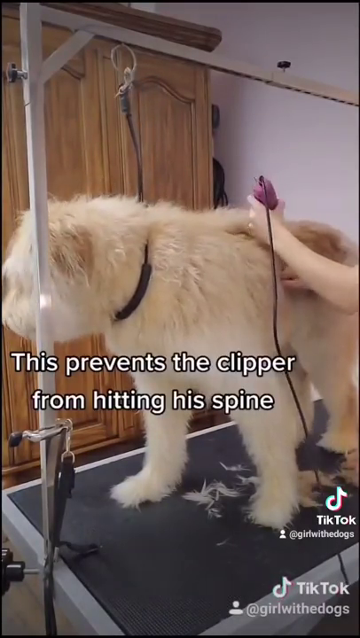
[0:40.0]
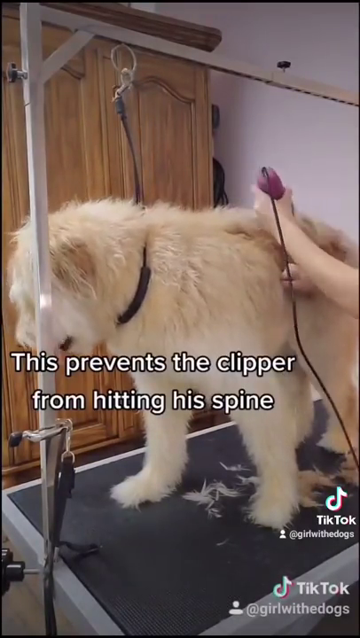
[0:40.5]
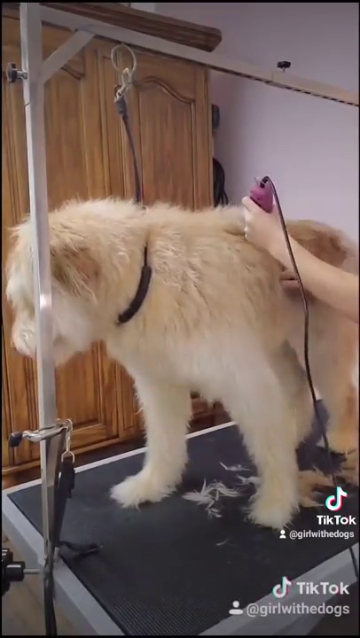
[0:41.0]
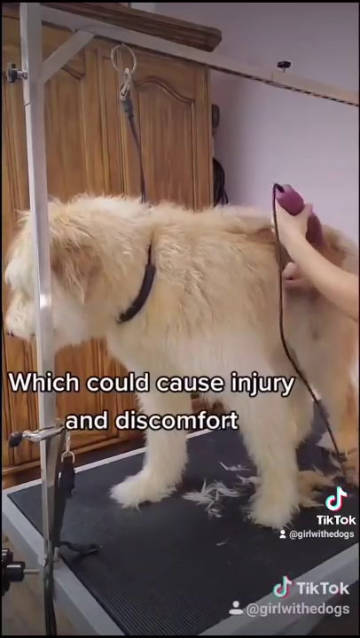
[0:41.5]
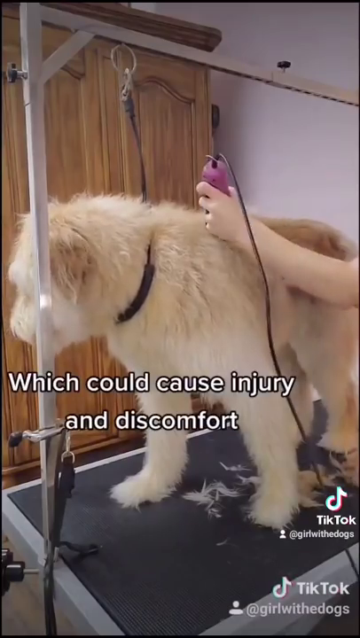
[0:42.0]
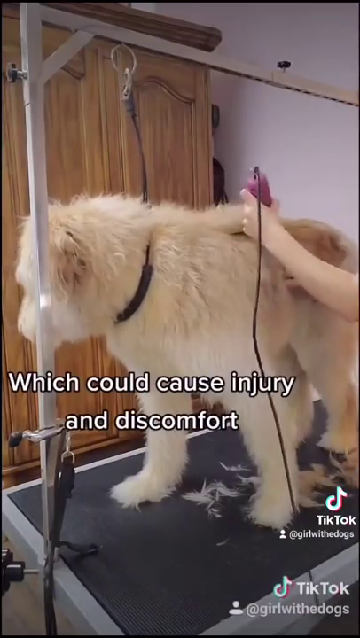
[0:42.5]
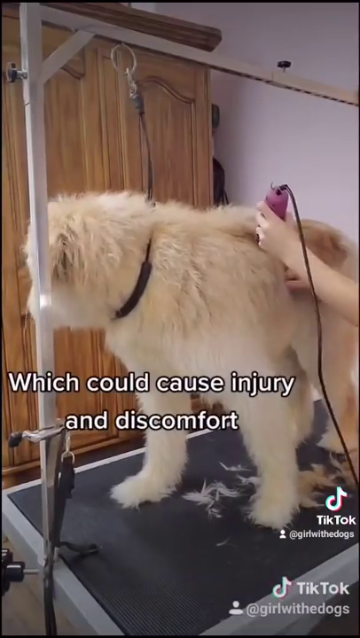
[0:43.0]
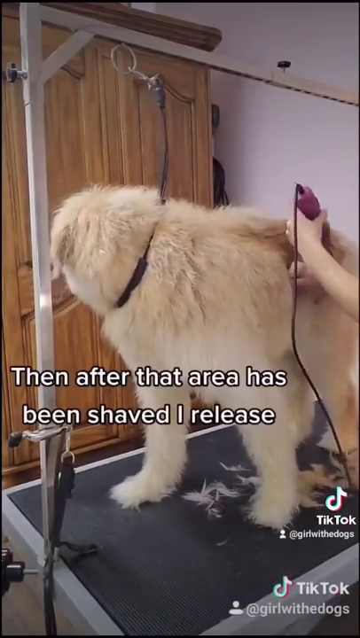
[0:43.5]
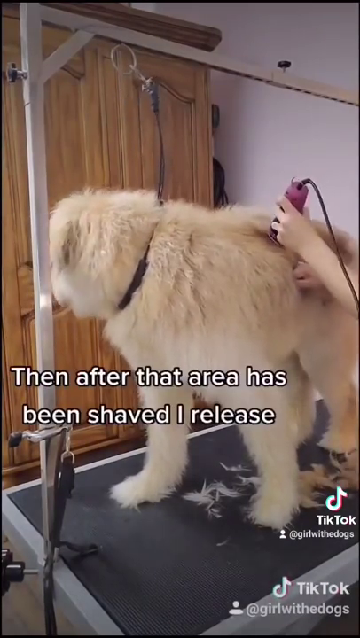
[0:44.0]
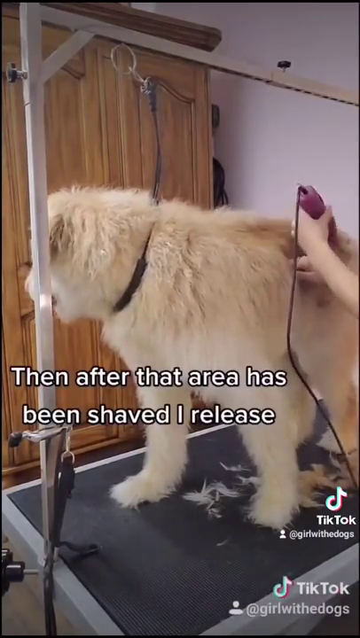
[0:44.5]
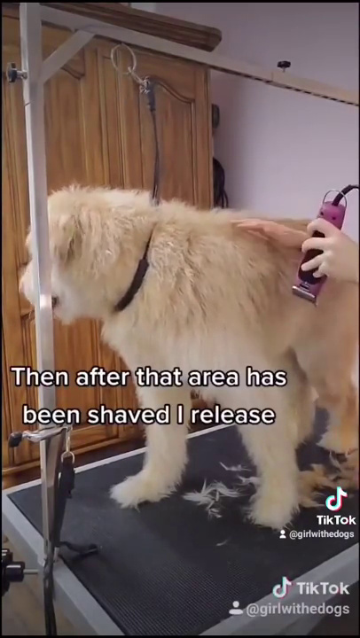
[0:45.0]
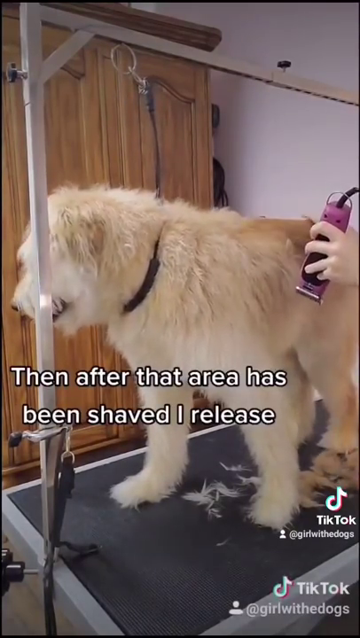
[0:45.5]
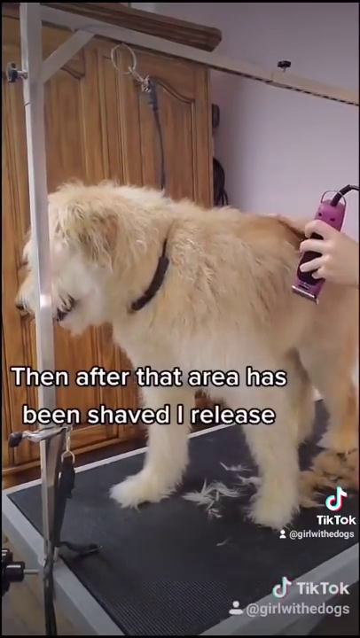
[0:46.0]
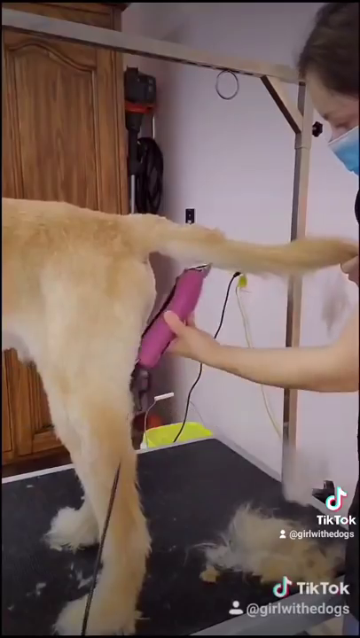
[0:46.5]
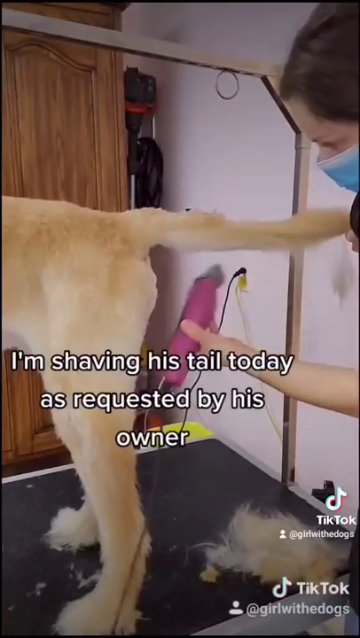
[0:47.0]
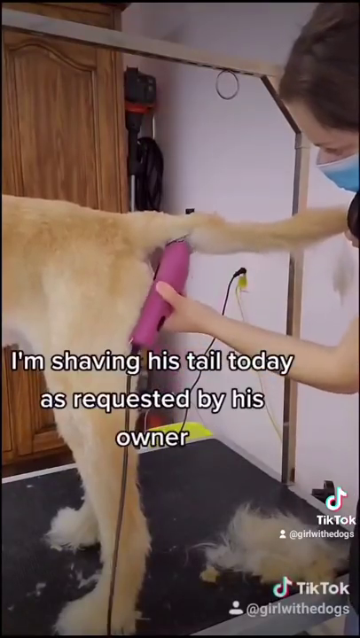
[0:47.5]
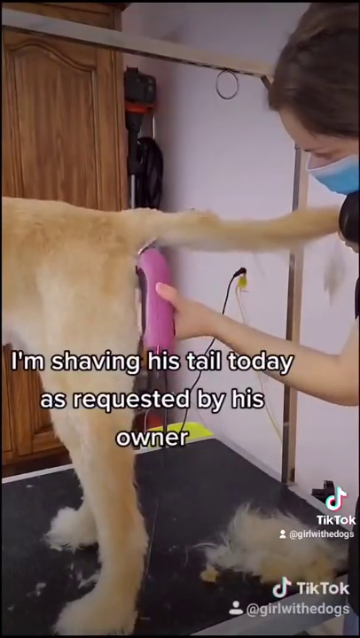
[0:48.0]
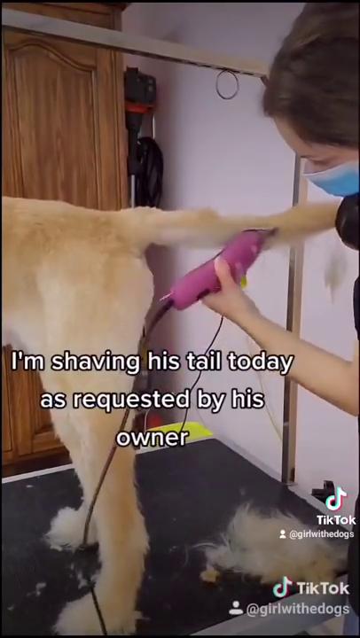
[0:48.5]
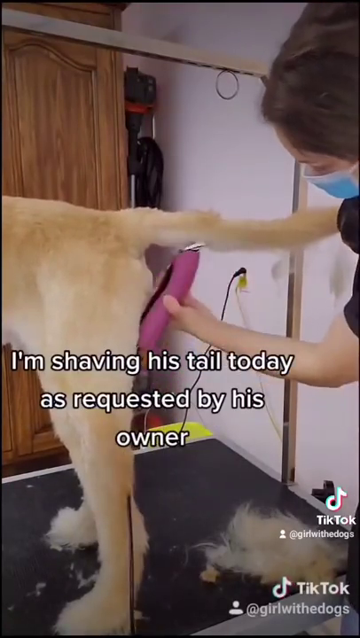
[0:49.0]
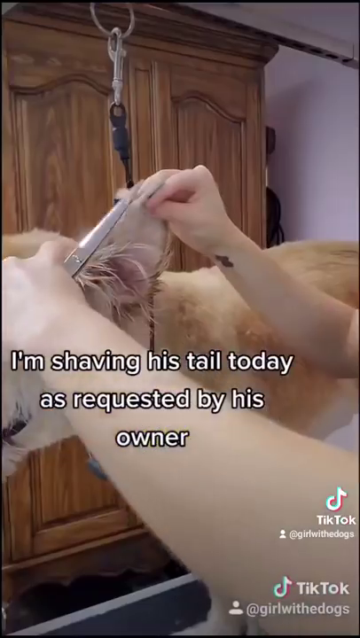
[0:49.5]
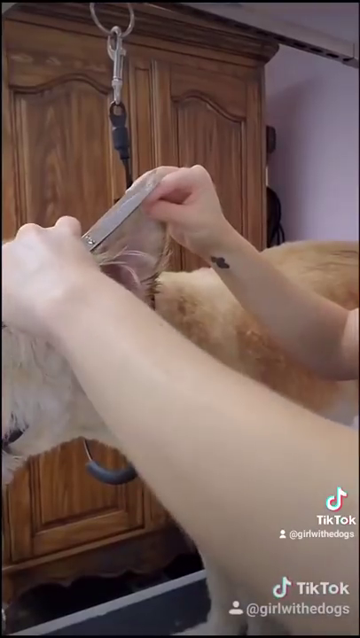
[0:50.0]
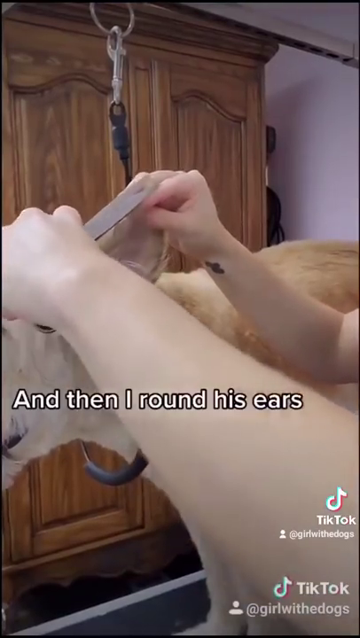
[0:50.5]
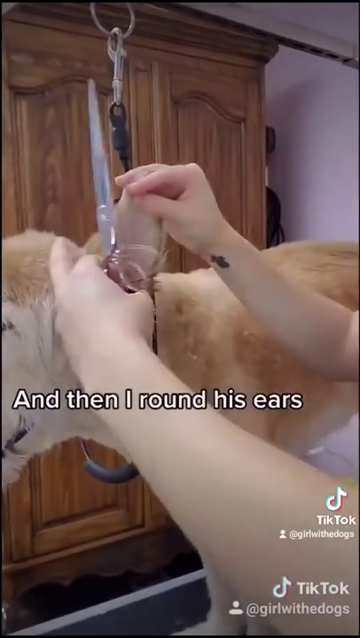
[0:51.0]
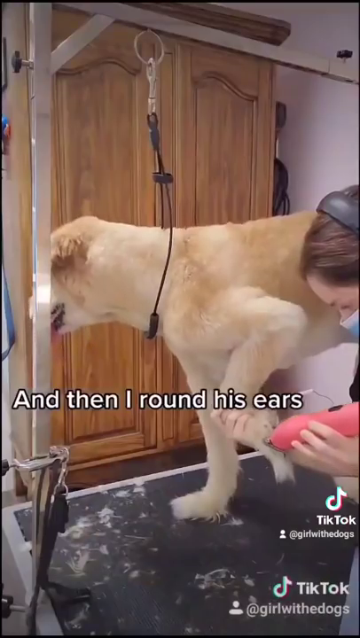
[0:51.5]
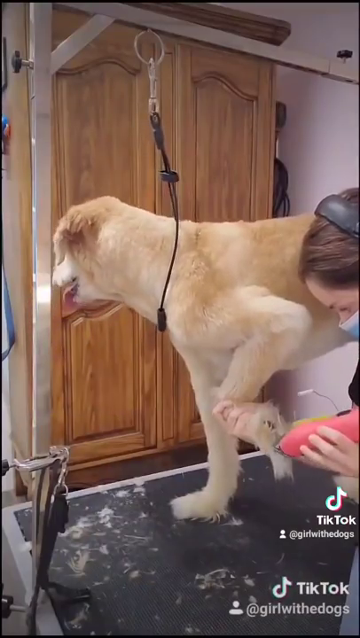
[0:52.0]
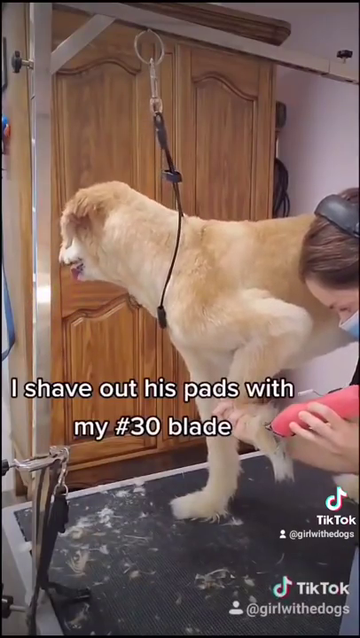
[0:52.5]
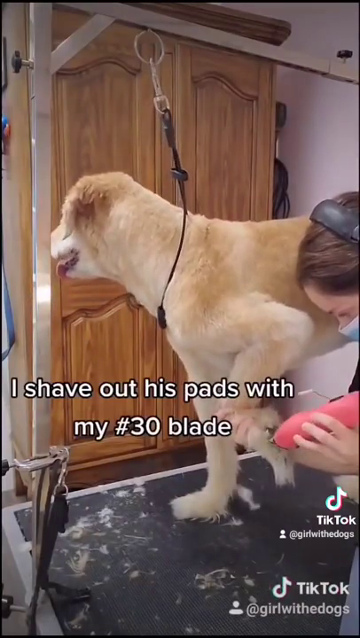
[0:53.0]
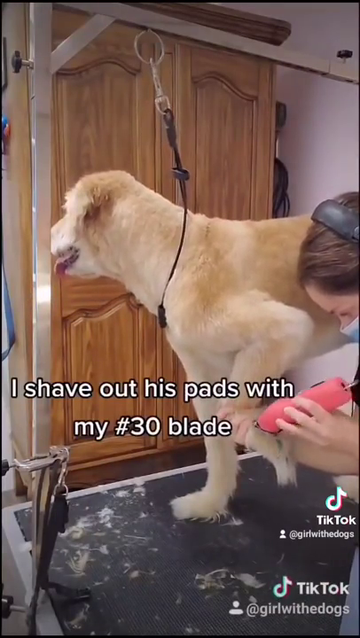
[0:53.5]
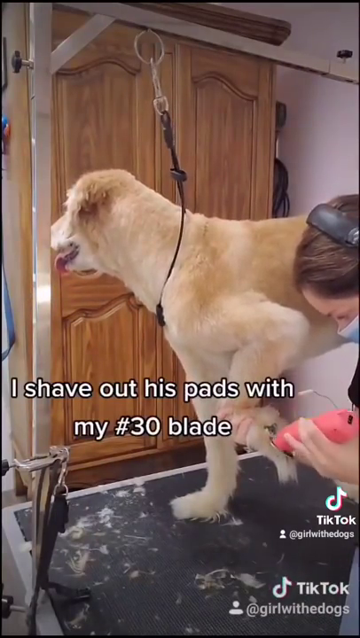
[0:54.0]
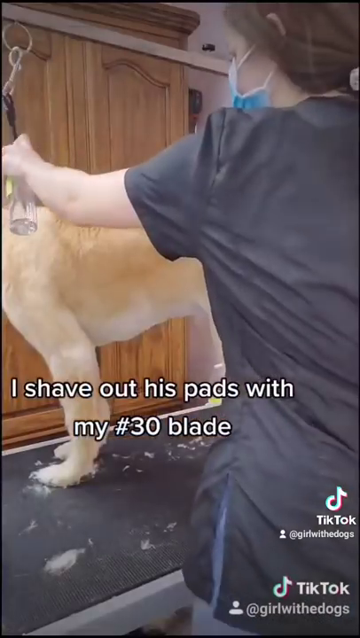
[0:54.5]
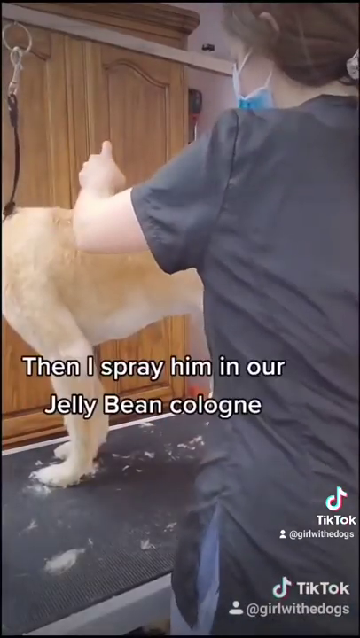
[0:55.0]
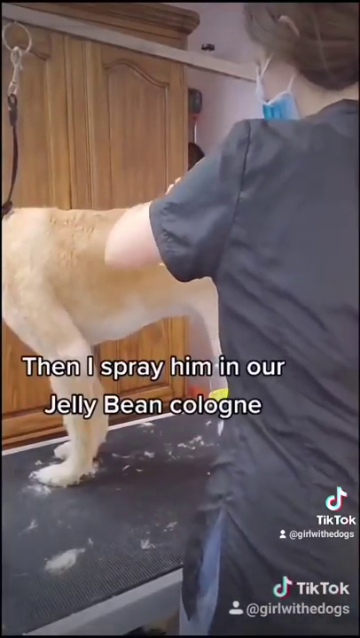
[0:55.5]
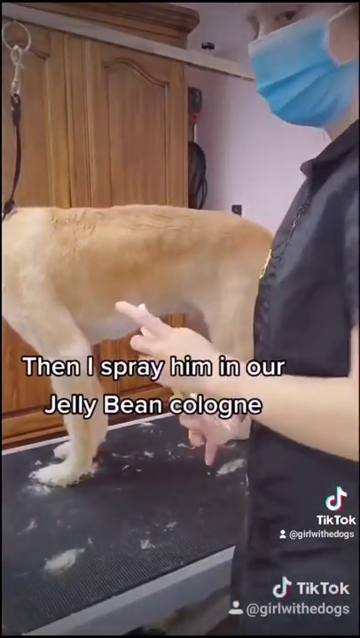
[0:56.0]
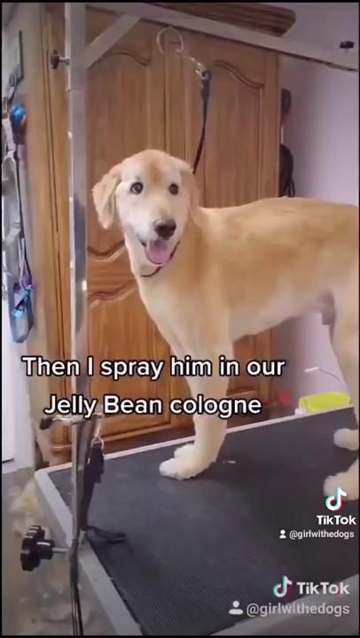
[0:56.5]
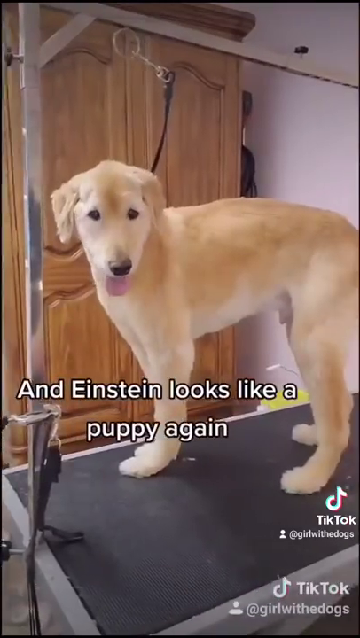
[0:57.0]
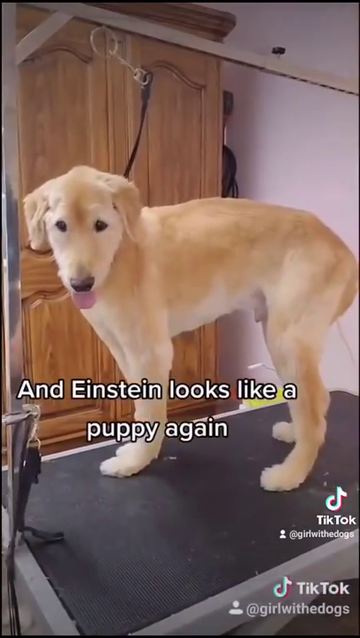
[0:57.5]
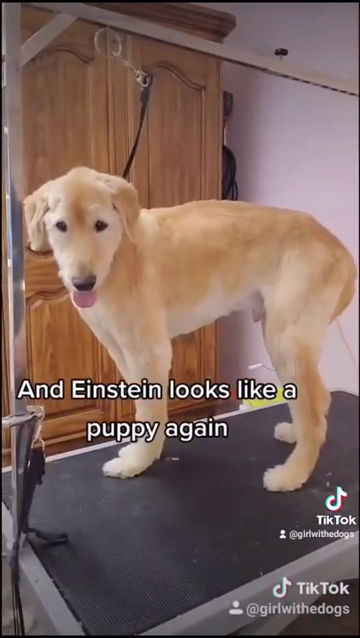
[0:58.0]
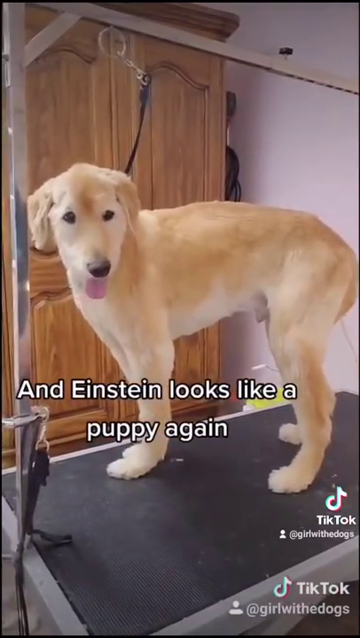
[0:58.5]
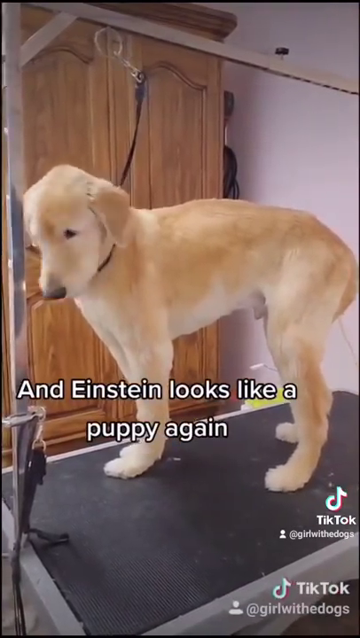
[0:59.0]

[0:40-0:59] The golden doodle is standing on a black and gray table, connected by a noose that holds him in place, and is being shaved with pink clippers. The TikTok symbol, the text "TikTok" and the user's TikTok handle appear in white in the bottom right of this TikTok clip from Girl with the Dogs. The dog is looking away from the camera. Toward the center of the screen, white text with a black outline reads "this prevents the clipper from hitting his spine", then changes to "which could cause injury and discomfort", and then to "then after that area has been shaved I release". The camera then switches to a different angle showing the back lower half of the dog, his tail and his legs, still on the black and gray table. The dog's tail is being shaved with the pink clippers, and the girl is visible on the right holding the pink clippers.